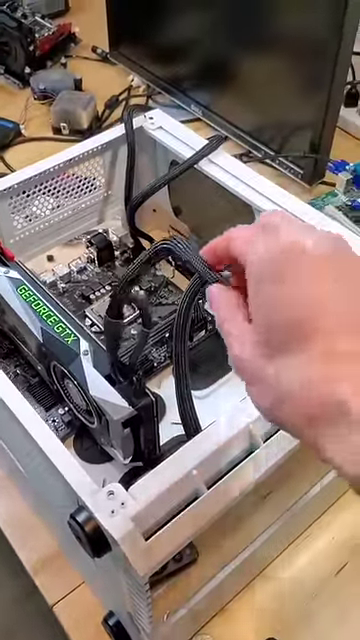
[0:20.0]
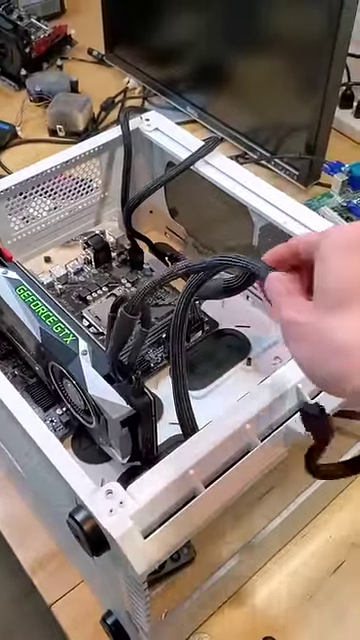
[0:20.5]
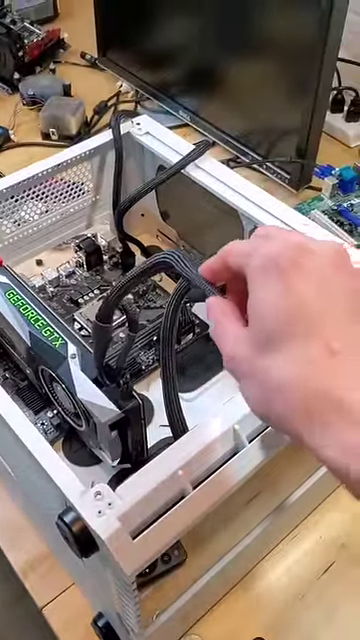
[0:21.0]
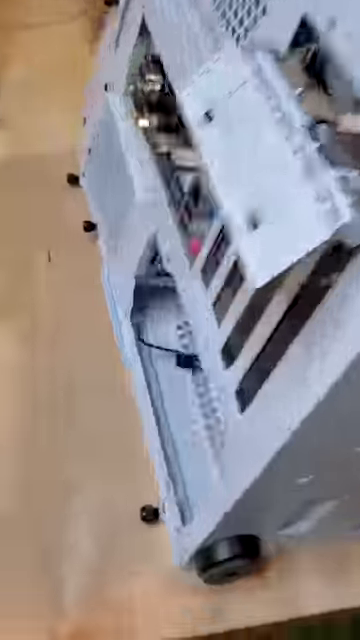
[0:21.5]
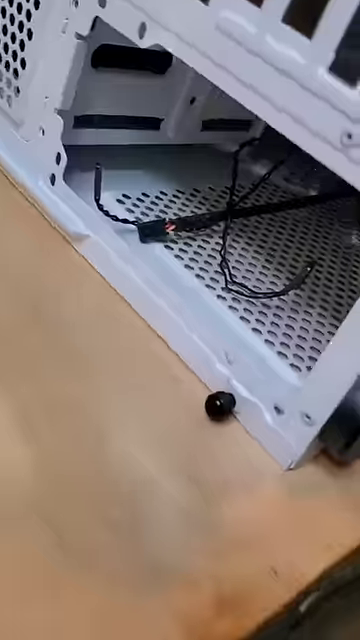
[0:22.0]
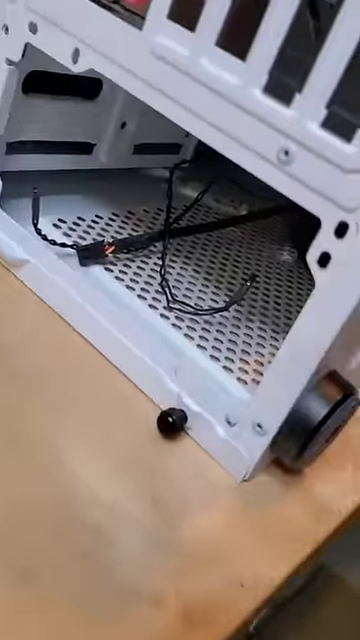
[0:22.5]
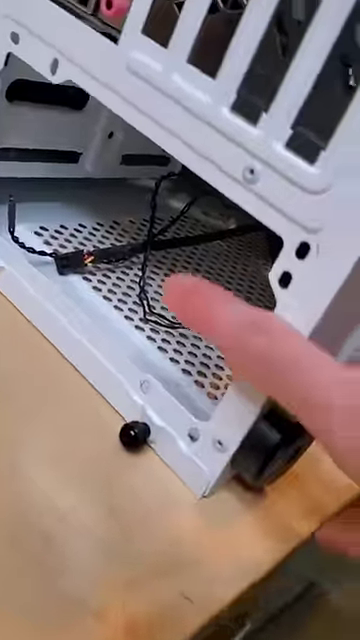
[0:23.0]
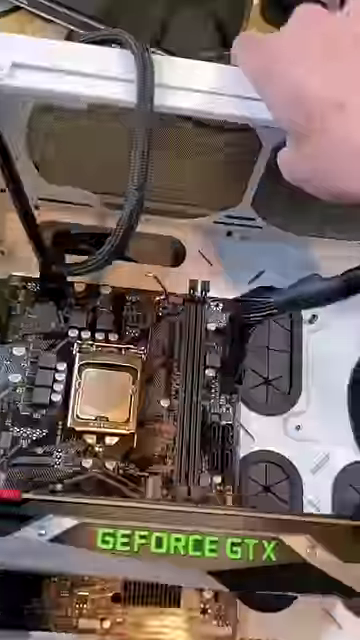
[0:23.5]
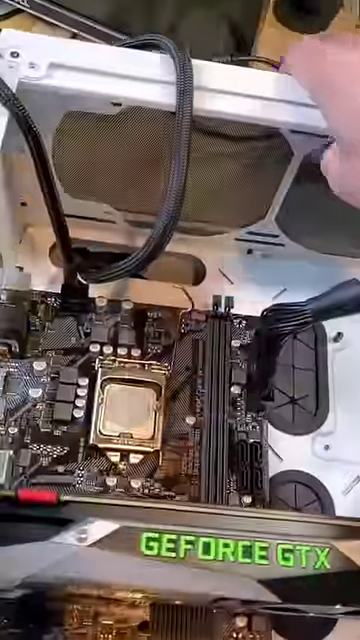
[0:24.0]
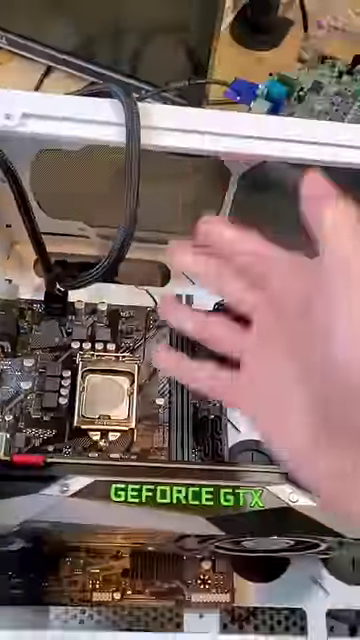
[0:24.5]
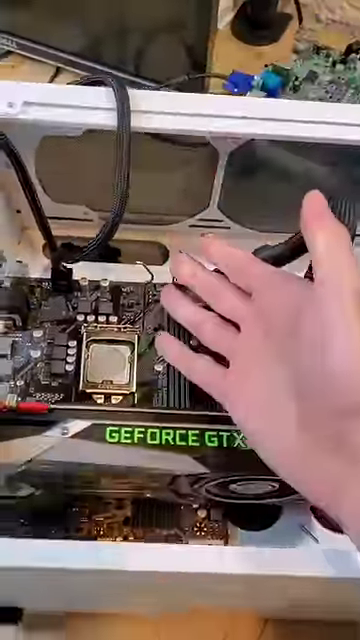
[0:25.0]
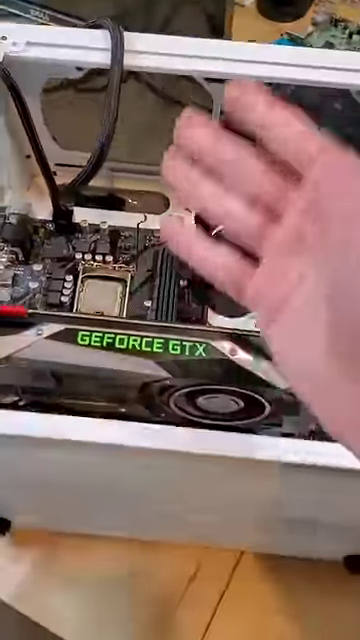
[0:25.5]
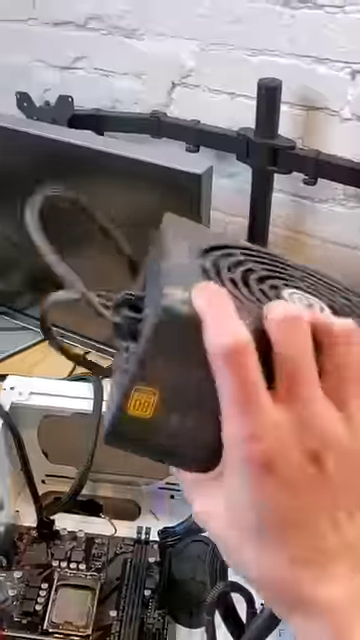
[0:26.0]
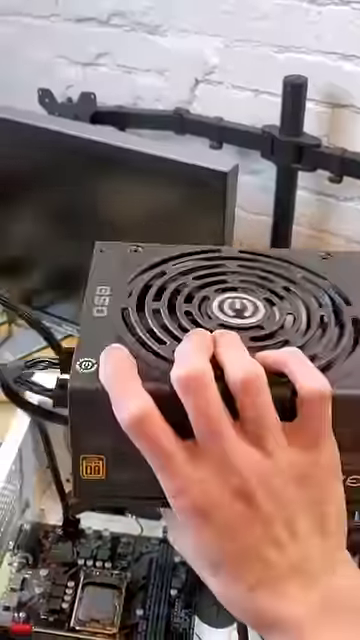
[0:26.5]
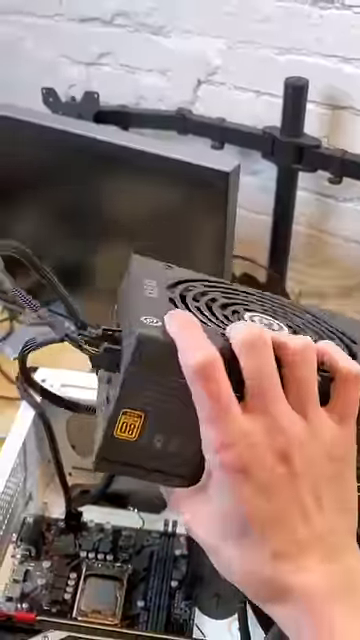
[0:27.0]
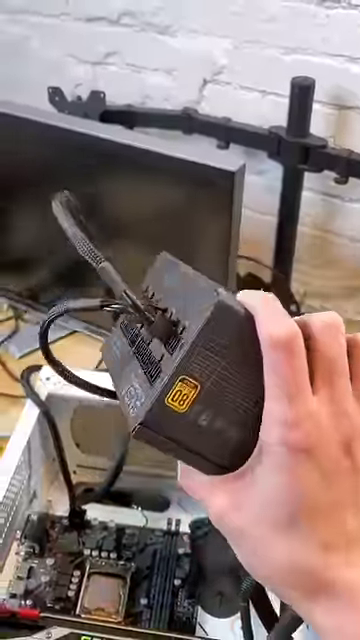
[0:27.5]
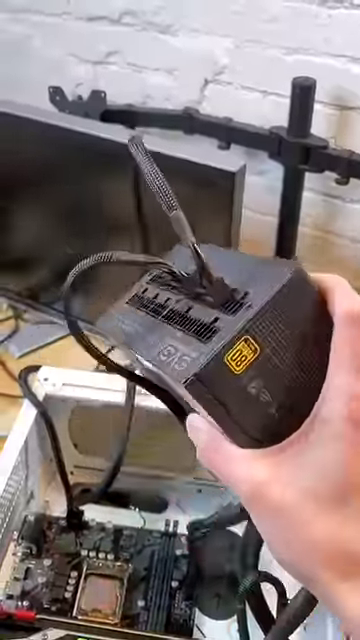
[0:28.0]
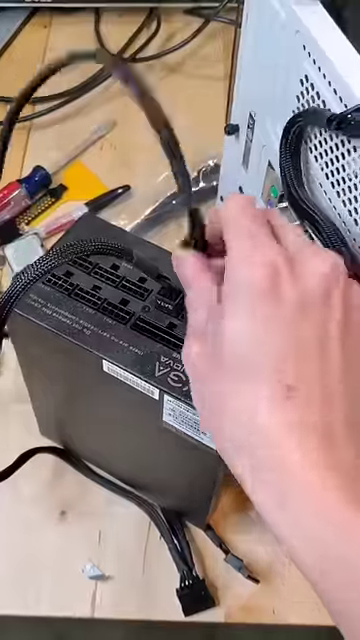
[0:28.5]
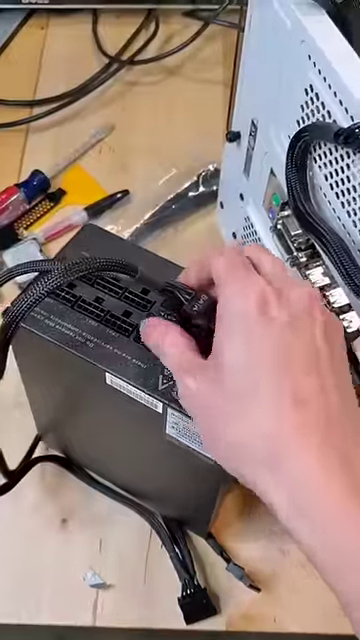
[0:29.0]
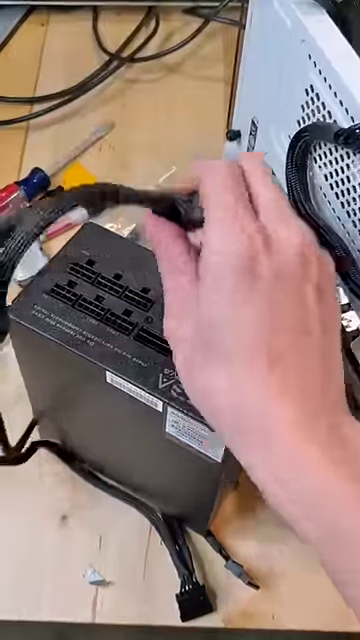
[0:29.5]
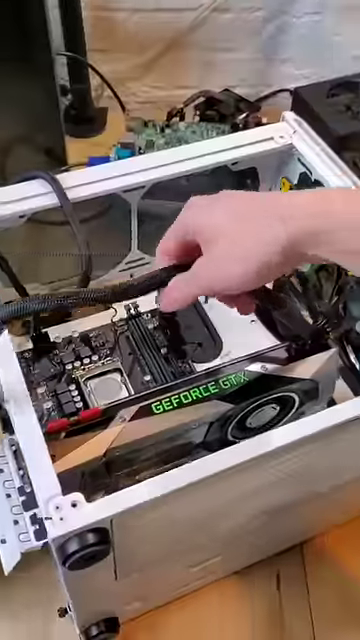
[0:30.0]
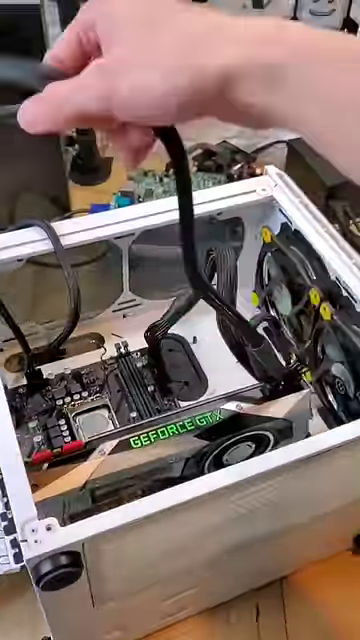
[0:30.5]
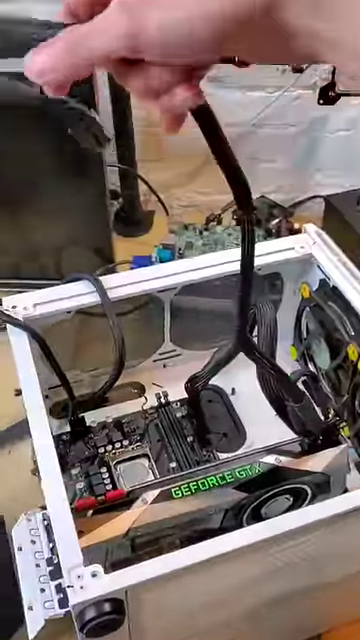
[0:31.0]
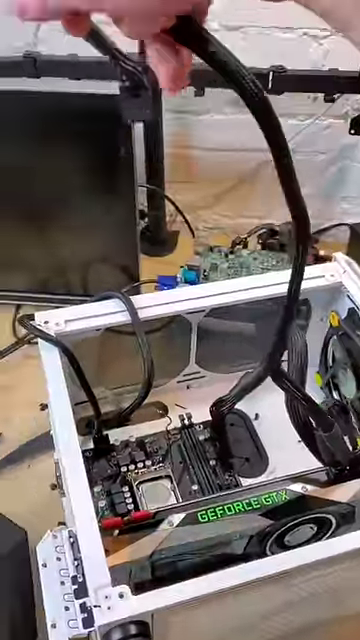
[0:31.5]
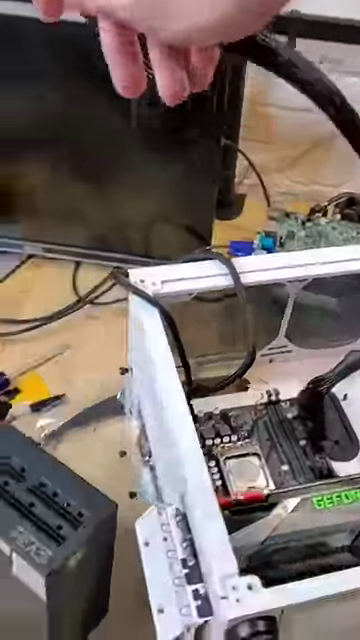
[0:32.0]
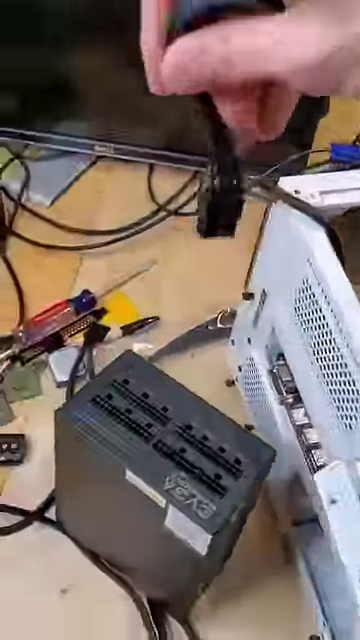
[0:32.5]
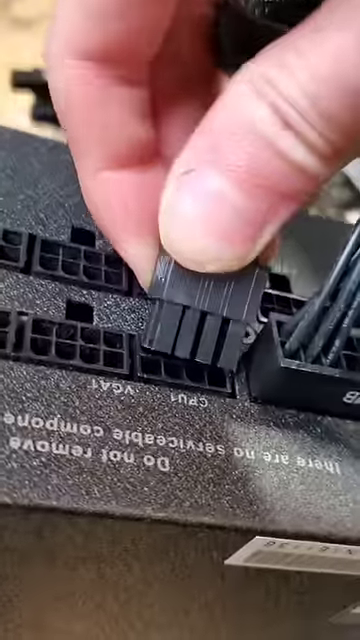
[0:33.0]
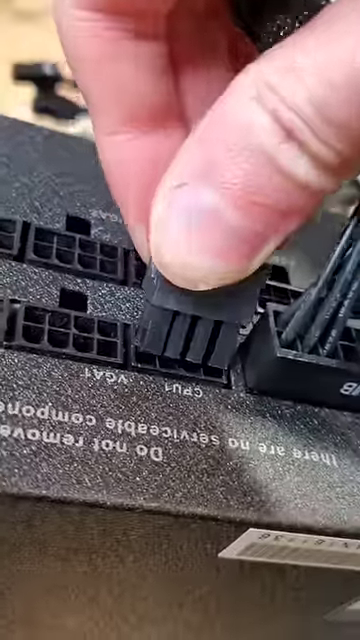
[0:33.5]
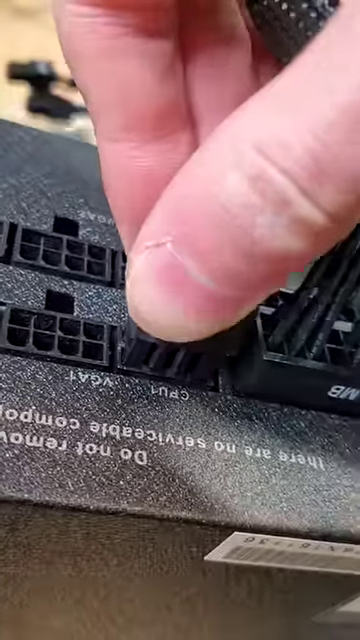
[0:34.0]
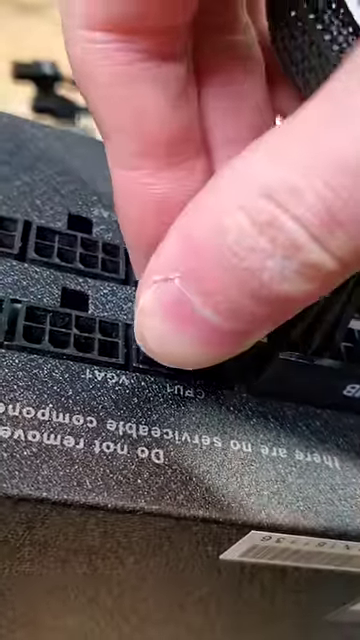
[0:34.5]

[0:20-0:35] The man's face is no longer visible; only his hands are seen moving around the computer, plugging and unplugging different wires and showing different components of the computer lying in front of him. He pulls out something large that appears to be a fan. It seems to be some sort of plug-in system rather than the motherboard, and it might be the power supply, as it has a lot of cords going into it.